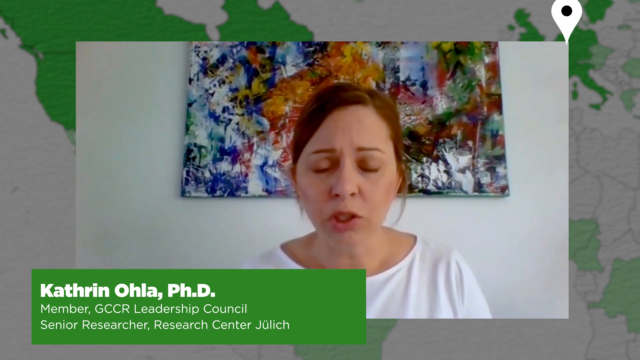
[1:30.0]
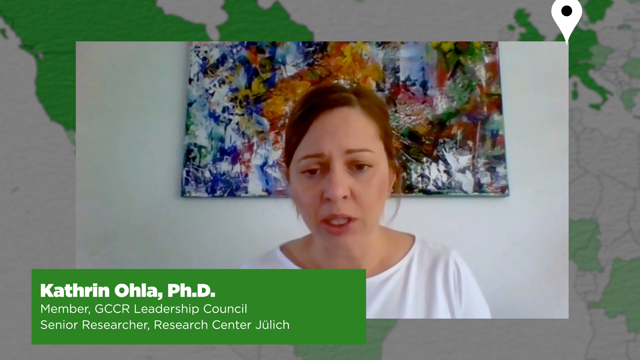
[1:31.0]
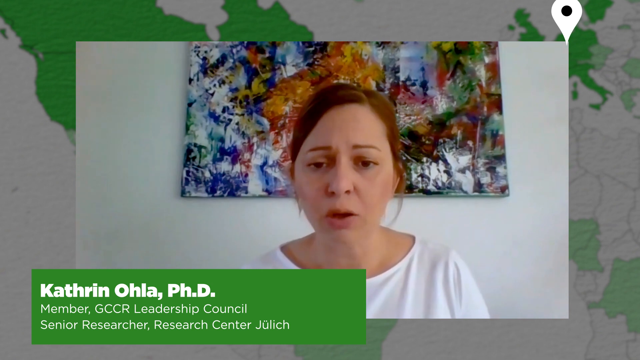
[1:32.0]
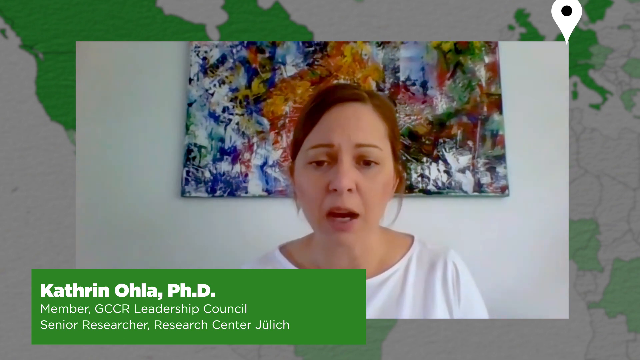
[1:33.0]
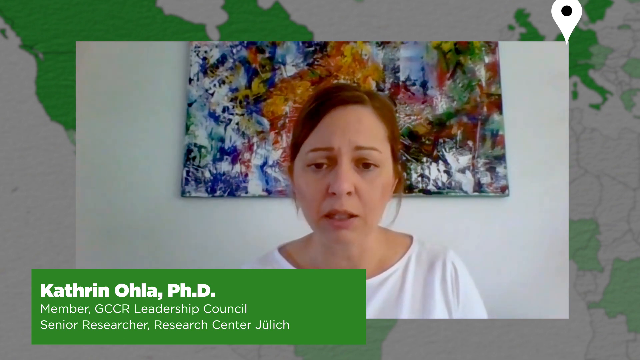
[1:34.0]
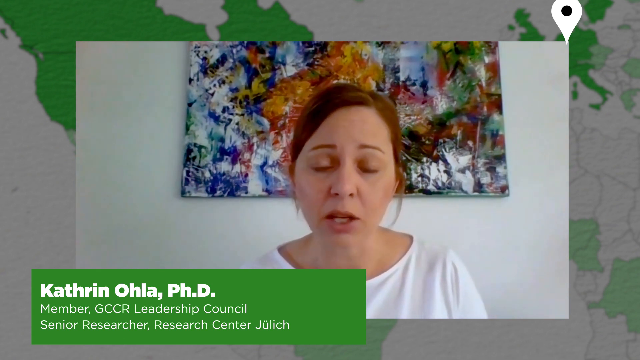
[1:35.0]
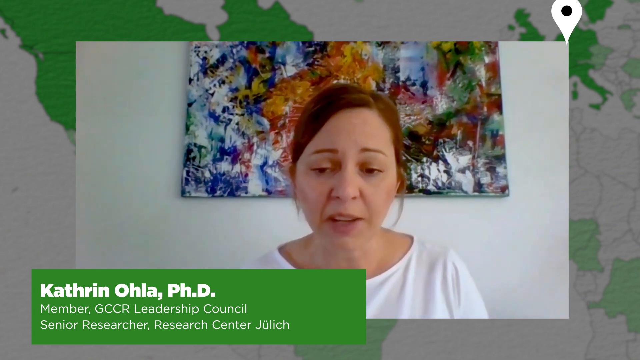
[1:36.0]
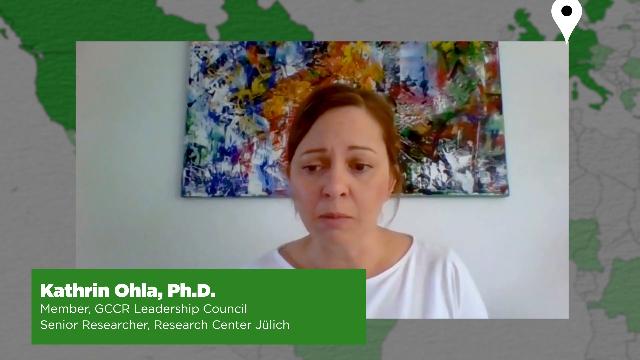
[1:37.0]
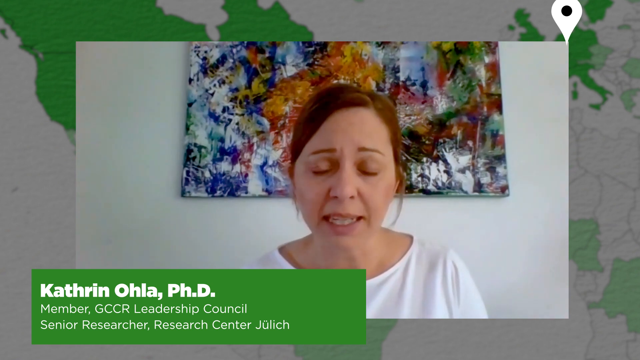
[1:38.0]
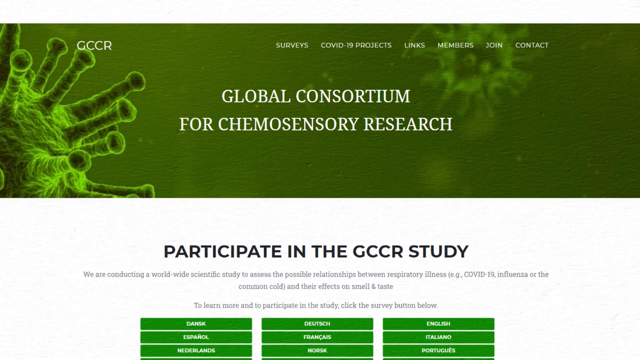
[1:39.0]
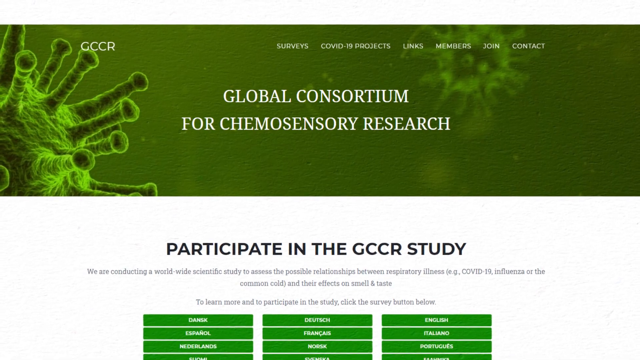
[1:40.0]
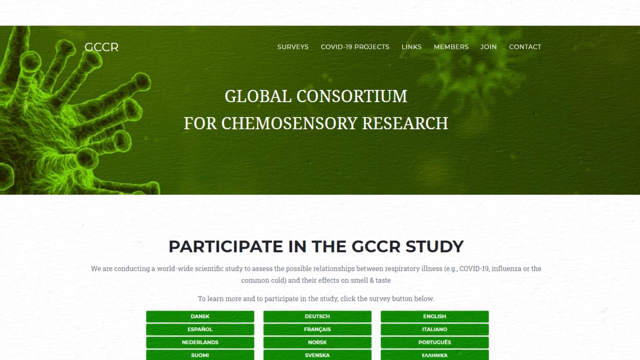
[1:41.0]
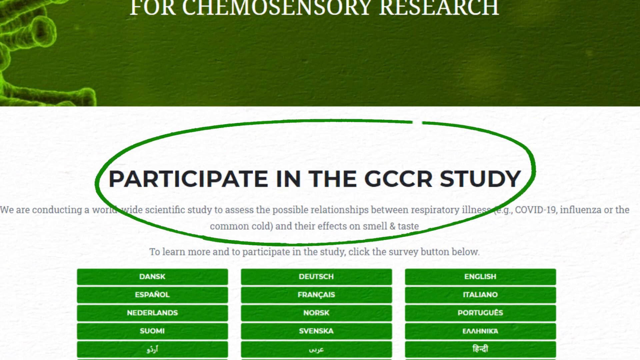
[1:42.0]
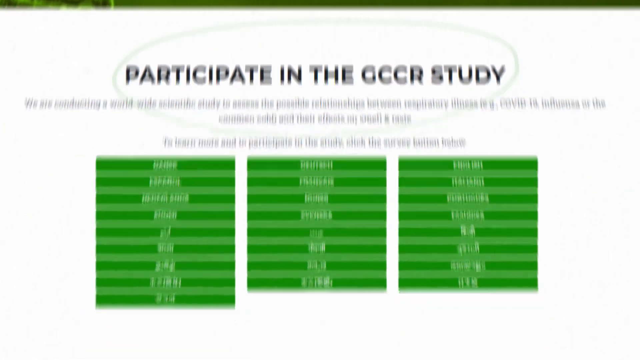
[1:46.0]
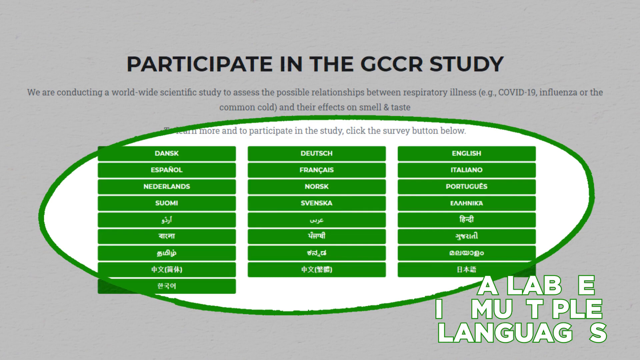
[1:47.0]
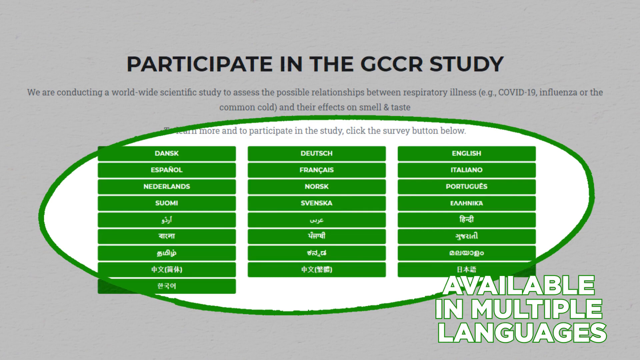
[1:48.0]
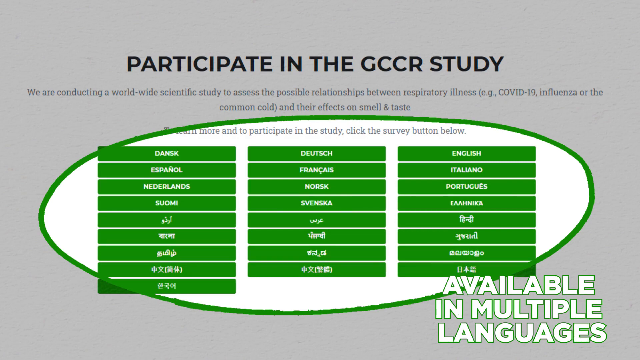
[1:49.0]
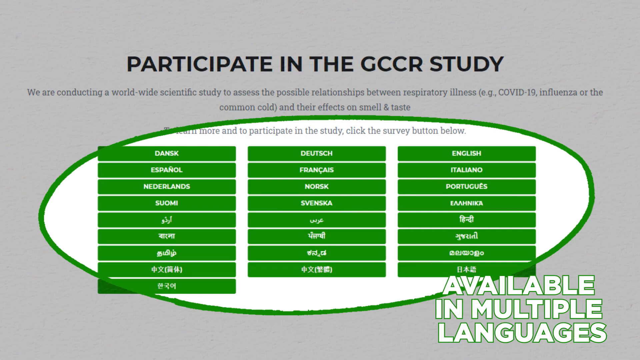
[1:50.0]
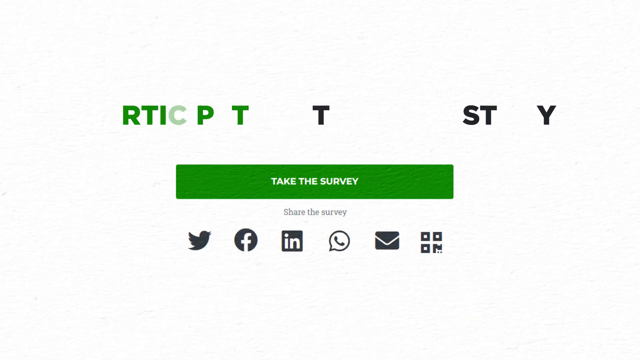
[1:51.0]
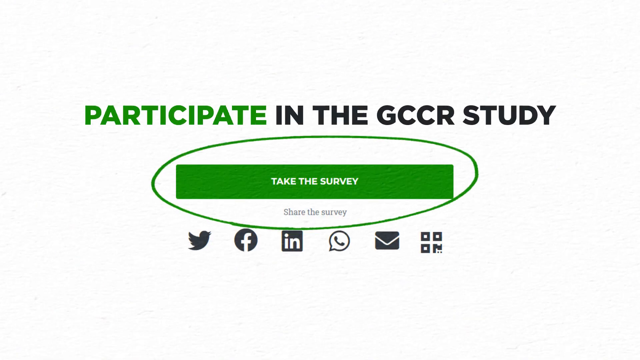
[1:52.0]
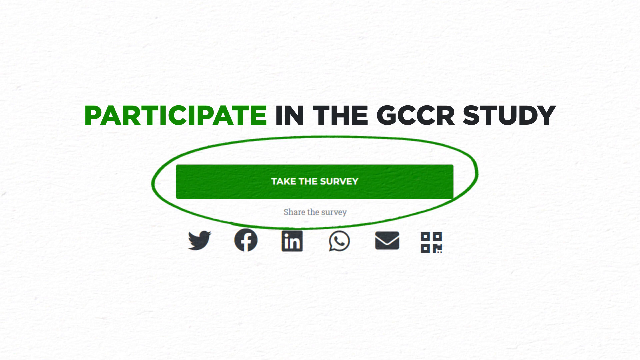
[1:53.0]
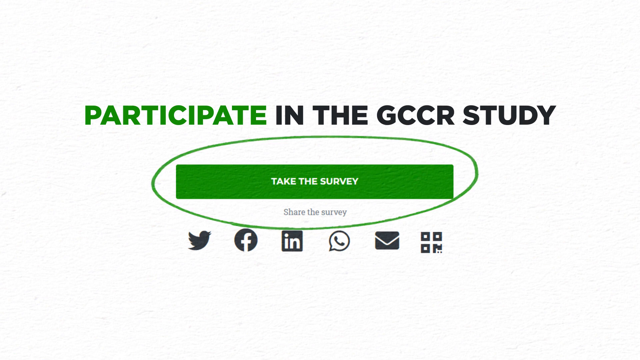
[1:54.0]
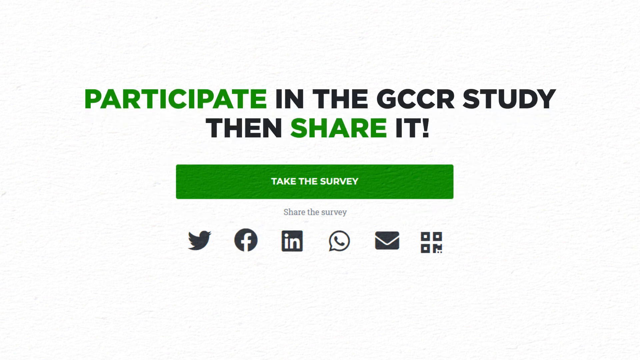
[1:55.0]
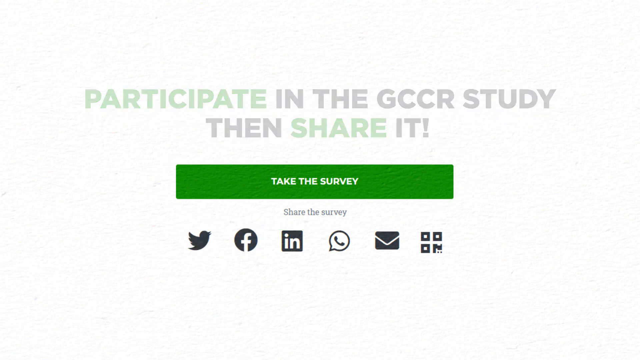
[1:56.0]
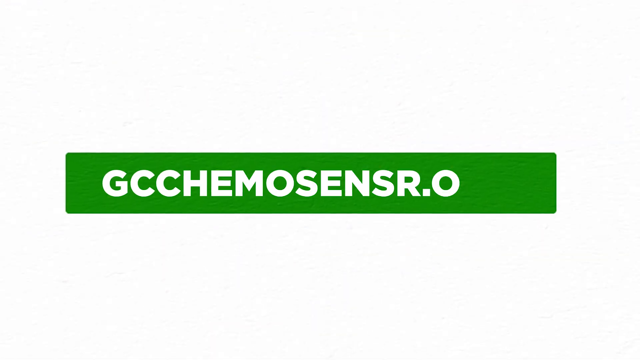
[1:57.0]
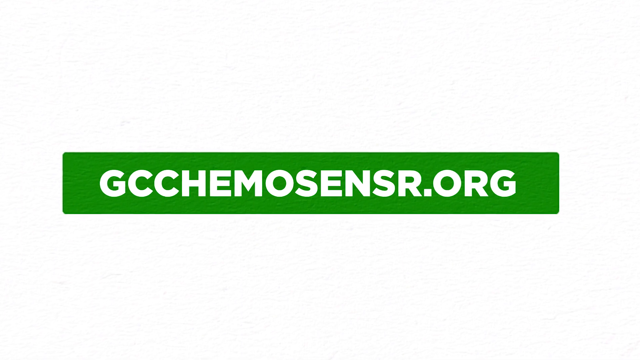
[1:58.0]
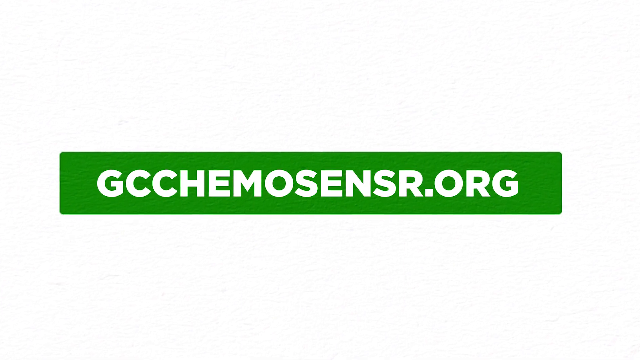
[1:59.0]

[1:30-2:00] A woman with red hair pulled back sits speaking directly into the camera, wearing a white shirt. Behind her is a white wall, and directly behind her a painting hangs on the wall that is just many colors, including blue, green, yellow, red and orange, with no design. Below her on the left side is a green rectangle with white text reading "Catherine Ola PhD member GCCR leadership council senior researcher research center." The screen then changes: the top part is green and the bottom part is white. The green part reads "Global Consortium for Chemosensory Research" in white, and beneath it in the white part, in black, it reads "Participate in the GCCR Study," followed by "we are conducting a worldwide scientific study to assess the possible relationship between respiratory illness, example COVID-19, influenza, or the common cold."